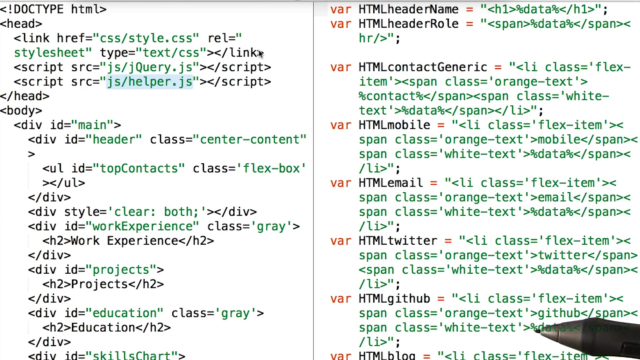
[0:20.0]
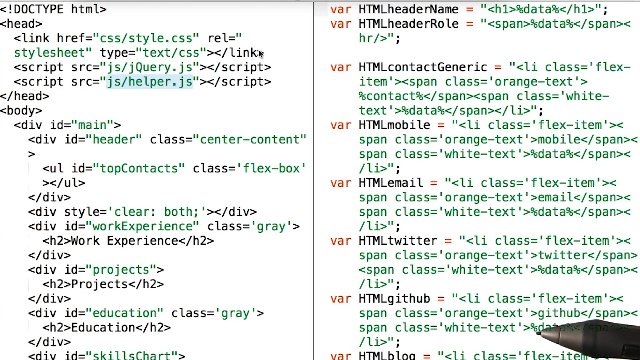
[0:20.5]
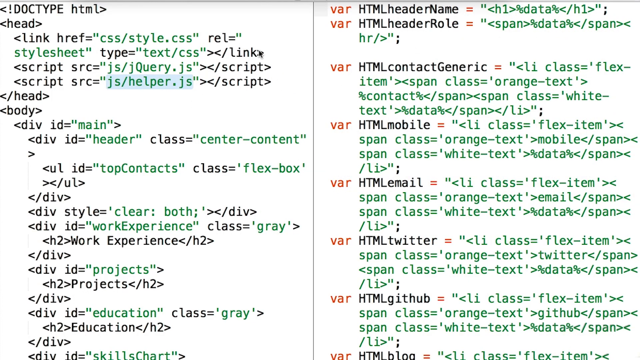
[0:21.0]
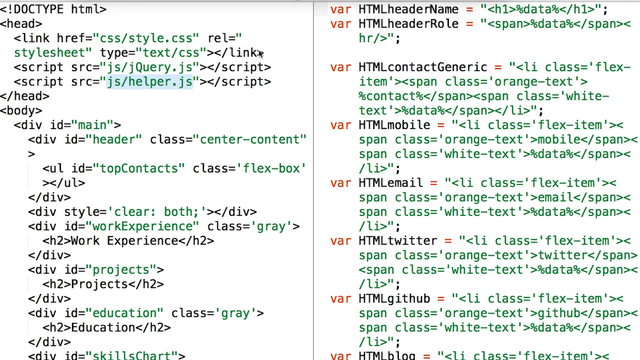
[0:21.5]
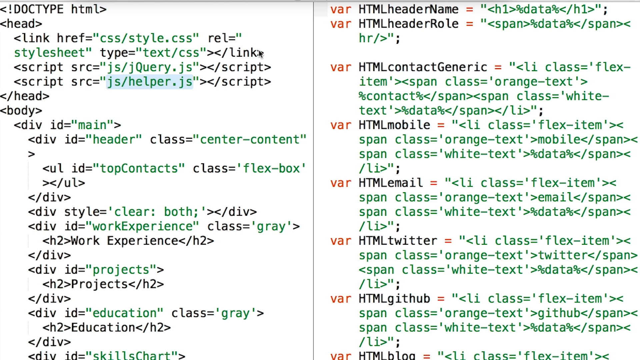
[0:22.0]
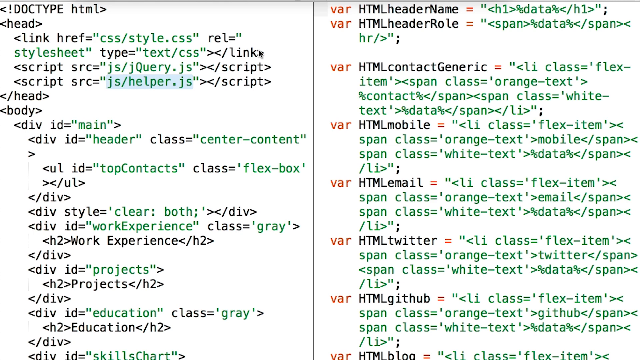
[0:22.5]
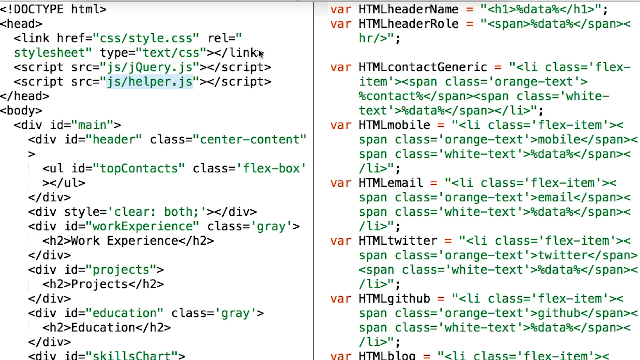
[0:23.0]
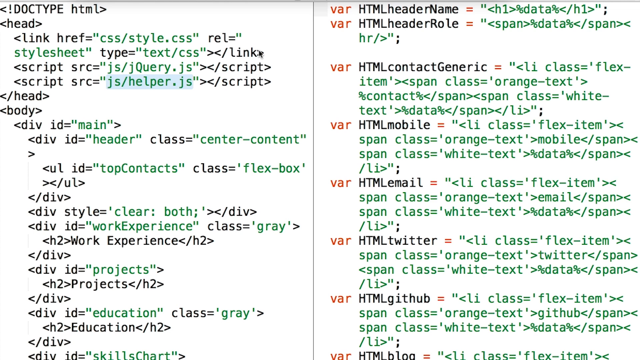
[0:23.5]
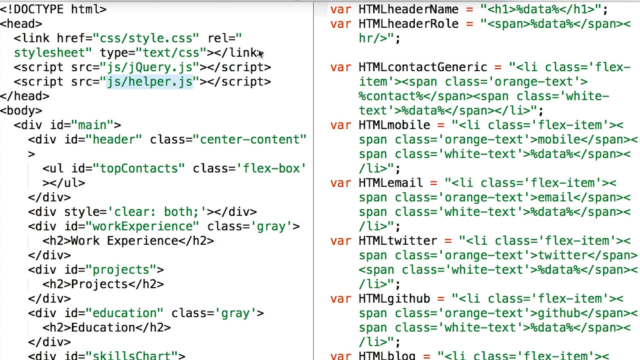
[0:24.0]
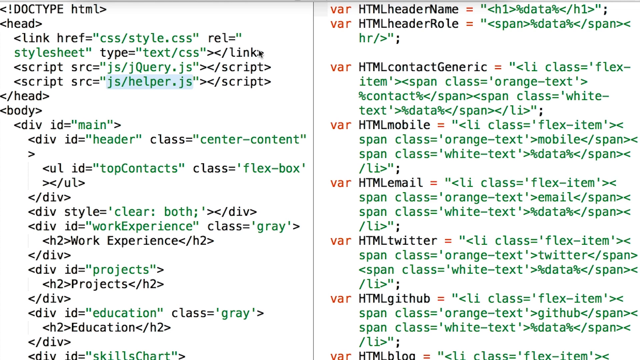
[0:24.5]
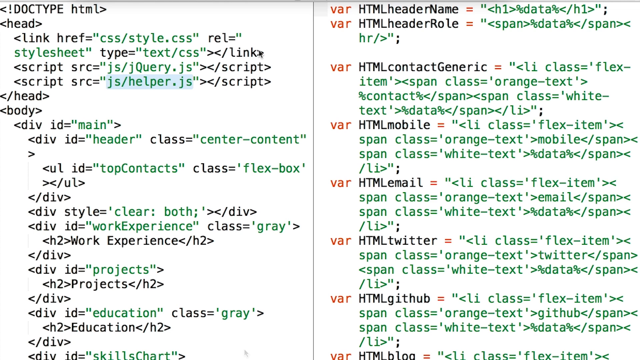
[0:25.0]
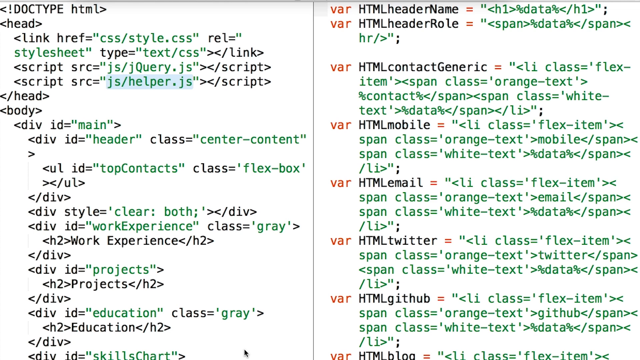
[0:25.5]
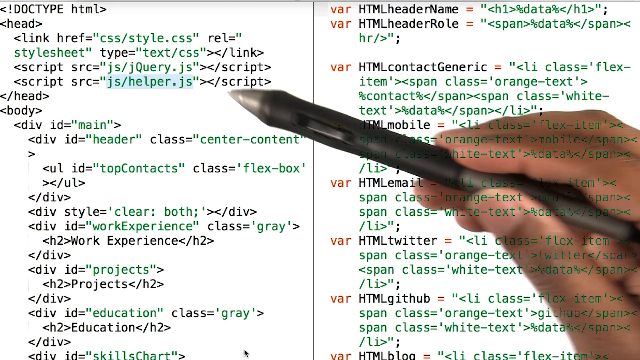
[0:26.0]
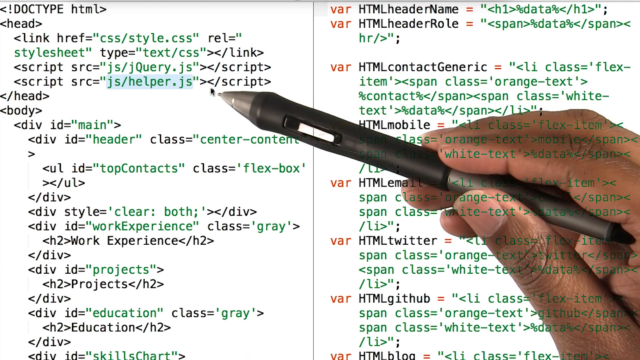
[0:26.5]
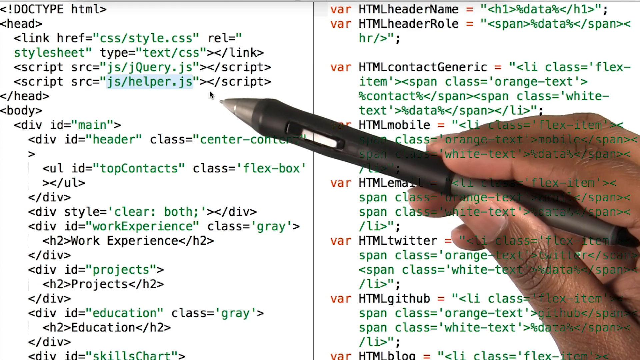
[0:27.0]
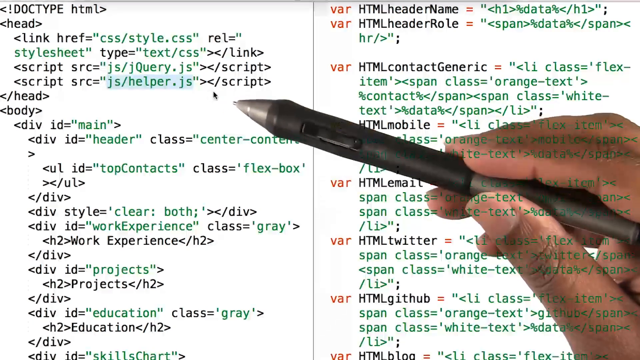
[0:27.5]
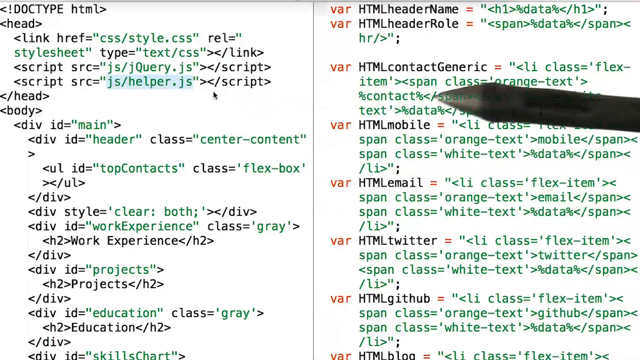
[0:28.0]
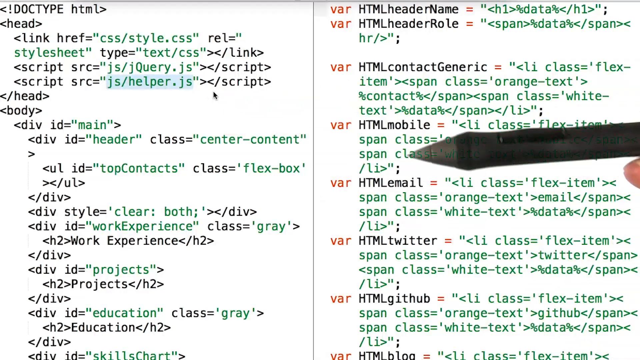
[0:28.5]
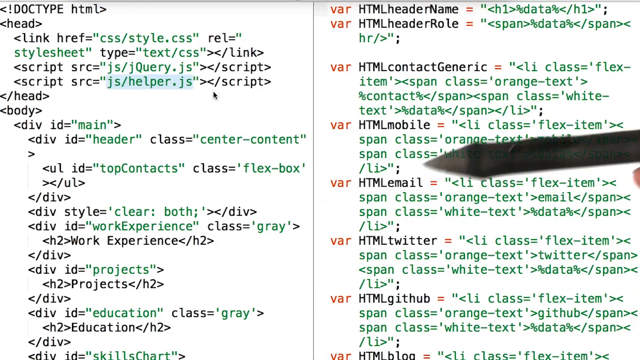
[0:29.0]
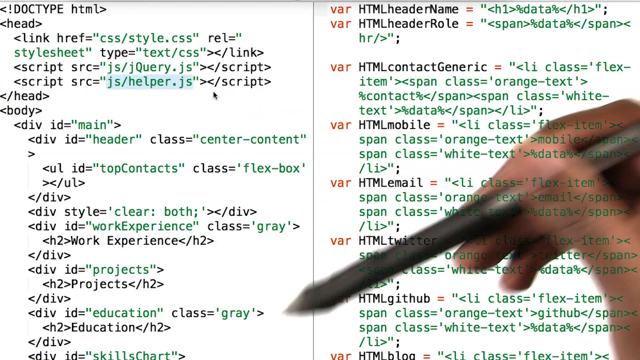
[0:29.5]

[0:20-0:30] With the marker out of the way, more of the code is visible. At the bottom, the left side has a div ID "skills chart", and the right side has a var called HTML block. The user's pen comes in and moves left and right, first pointing at the HTML helper part and then pointing downwards. It makes an up-and-down stabbing motion, either pointing toward the very bottom of the div chart on the left side or just as a generic downward pointing motion.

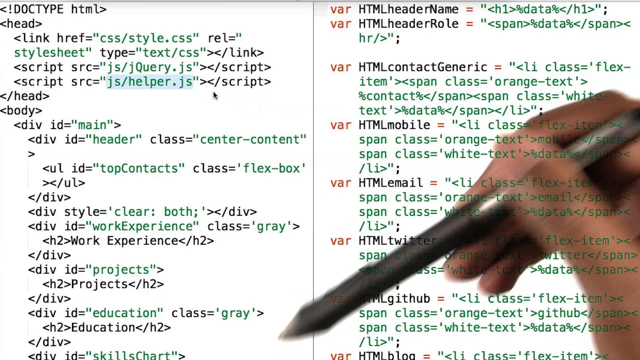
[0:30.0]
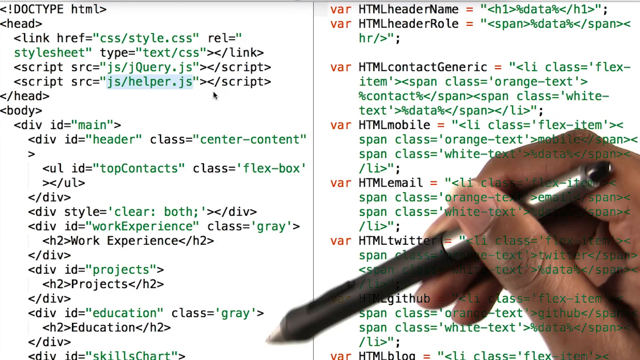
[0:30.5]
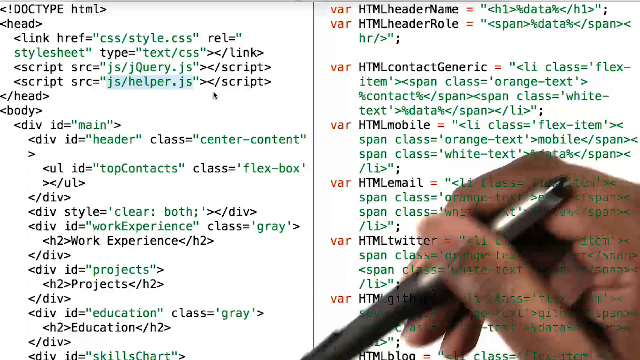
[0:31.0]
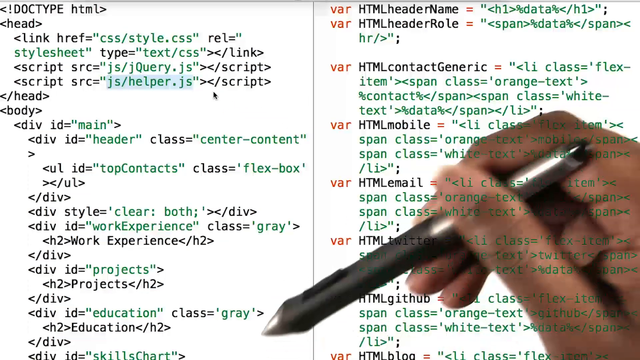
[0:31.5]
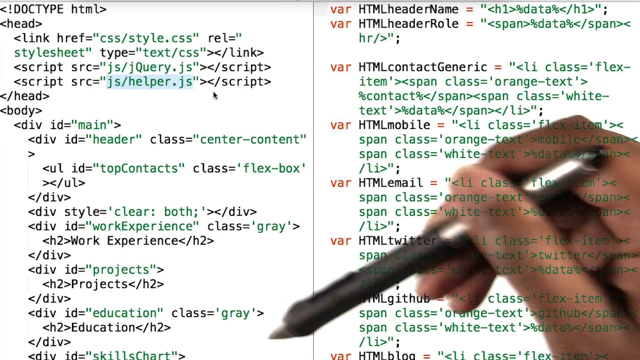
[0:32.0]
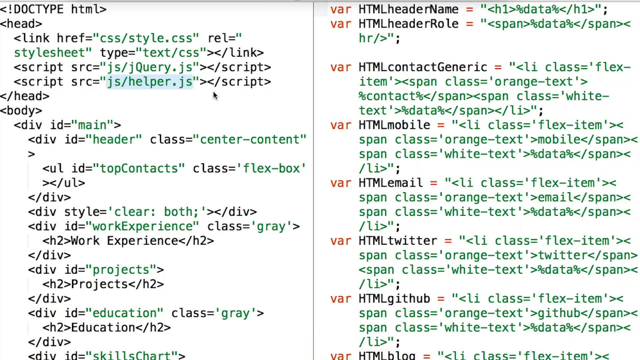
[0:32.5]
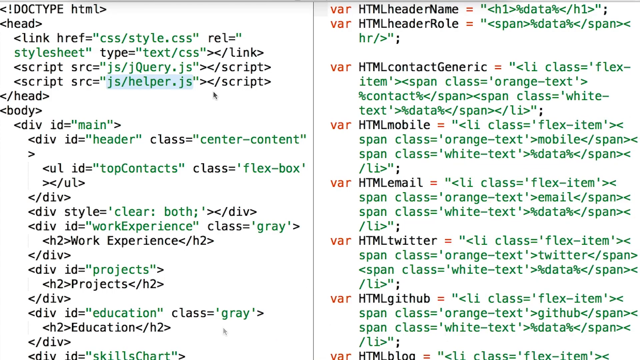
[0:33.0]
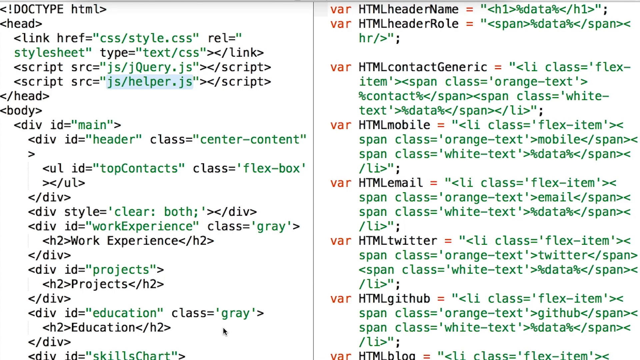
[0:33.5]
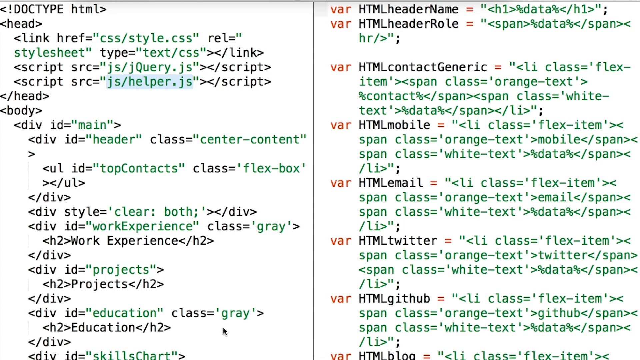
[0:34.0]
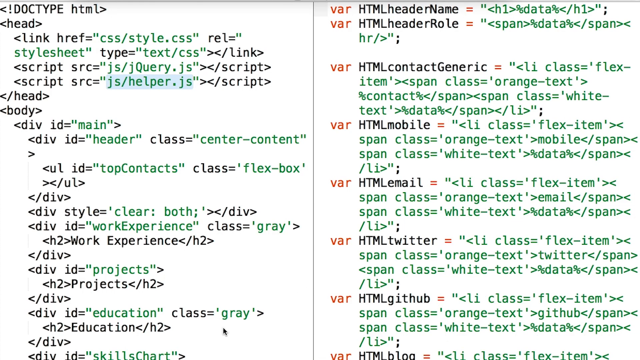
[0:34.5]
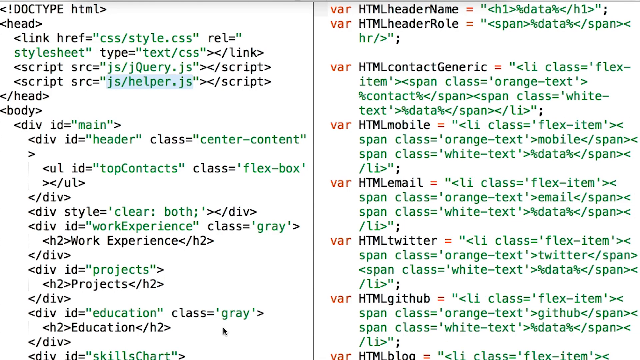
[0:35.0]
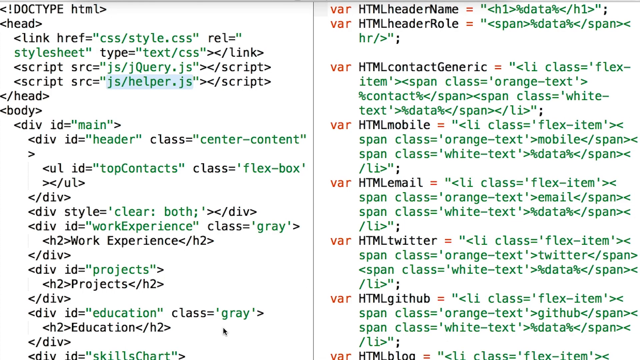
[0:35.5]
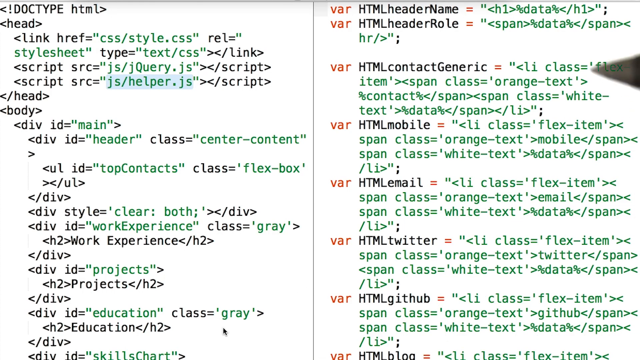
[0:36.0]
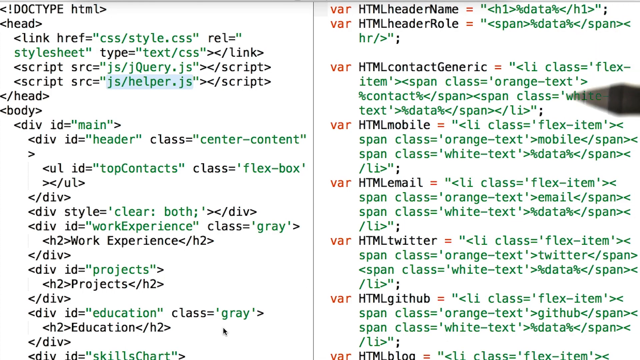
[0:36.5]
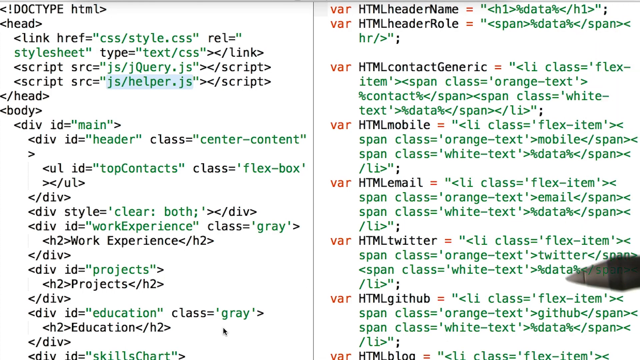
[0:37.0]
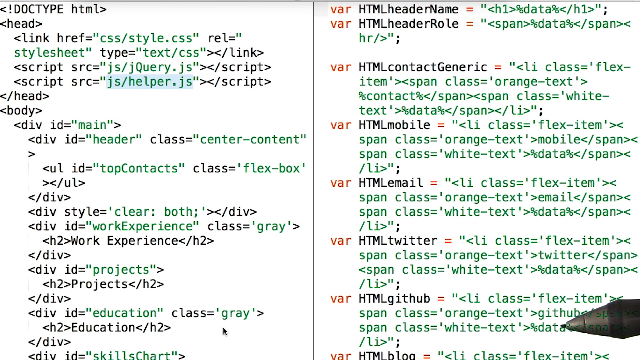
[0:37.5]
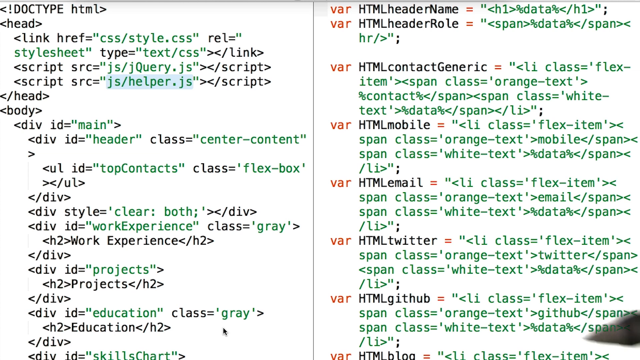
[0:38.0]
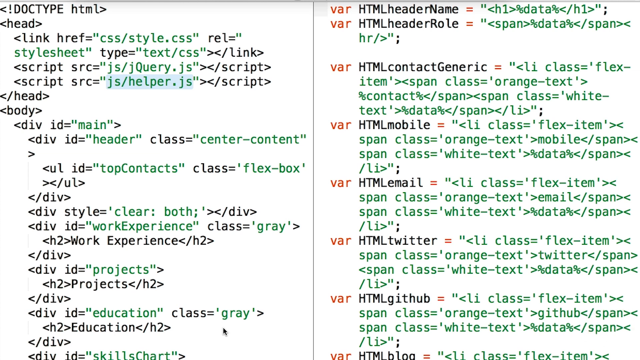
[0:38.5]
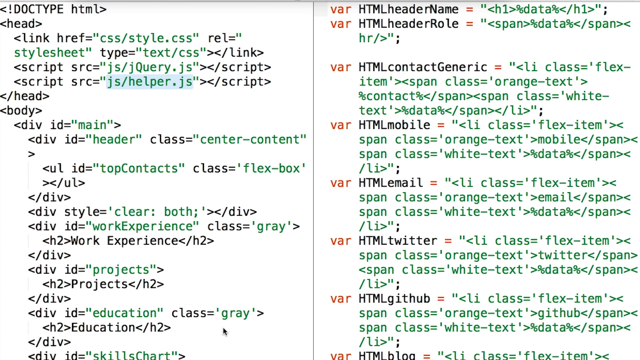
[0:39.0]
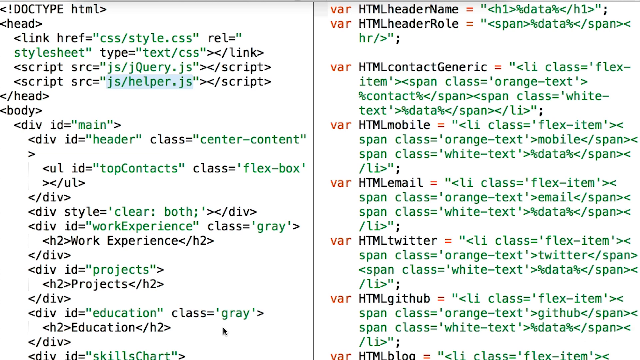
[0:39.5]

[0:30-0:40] The user keeps pointing downwards, holding the pen with the thumb and index finger, the fingers also pointing downwards. After pointing a few times, the hand moves out of the way. The code is unchanged. The var HTML header name contains a quote sign, open and close arrows, "H1", then percent data and "H1". None of the other vars contain H1; the second one, header row, has a span inside the arrows, and the rest all have an li class.